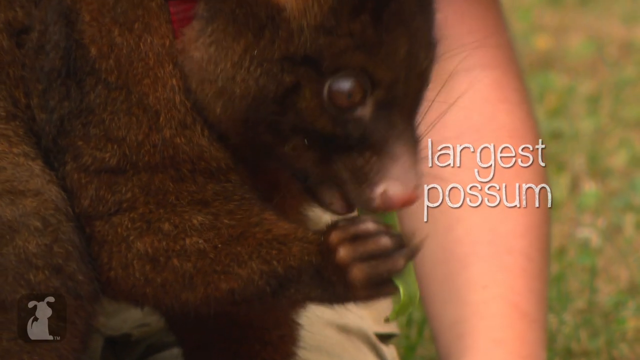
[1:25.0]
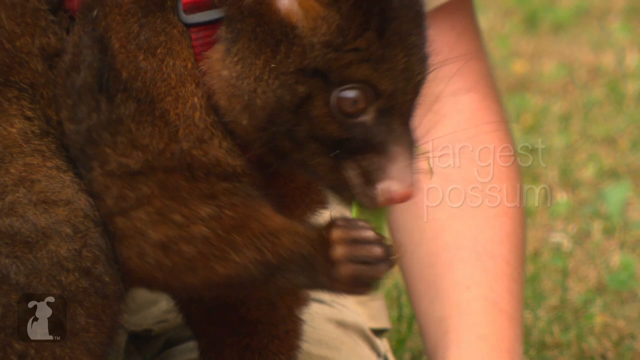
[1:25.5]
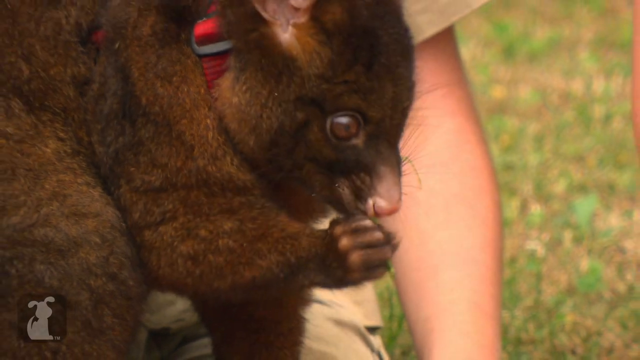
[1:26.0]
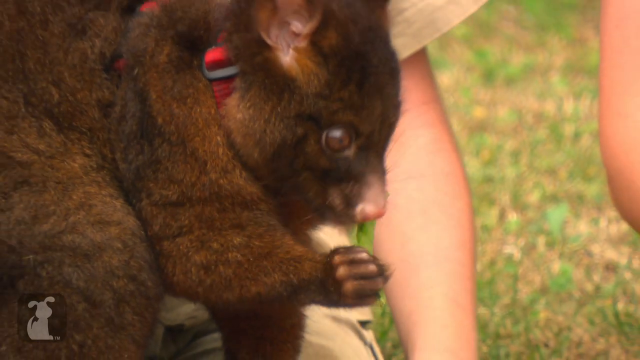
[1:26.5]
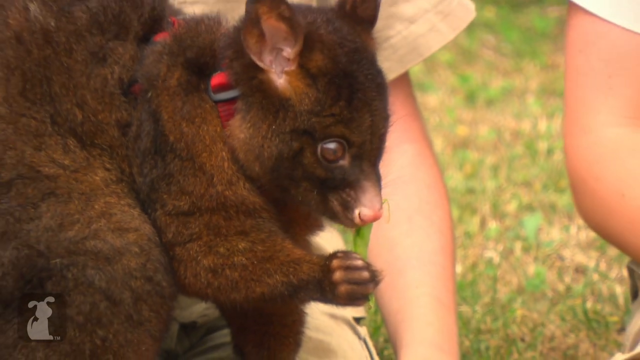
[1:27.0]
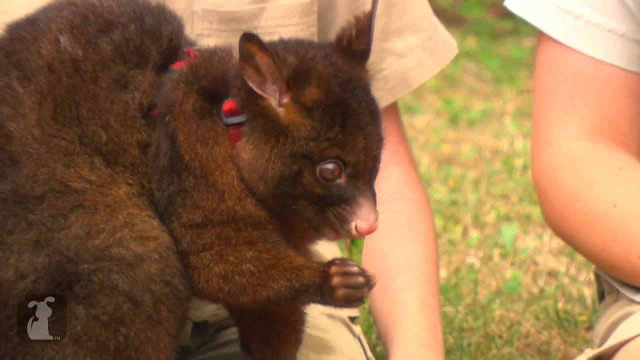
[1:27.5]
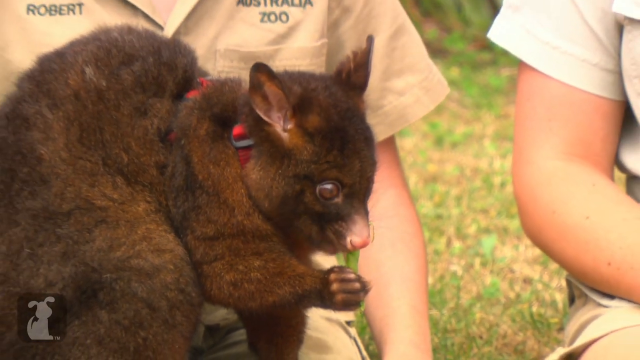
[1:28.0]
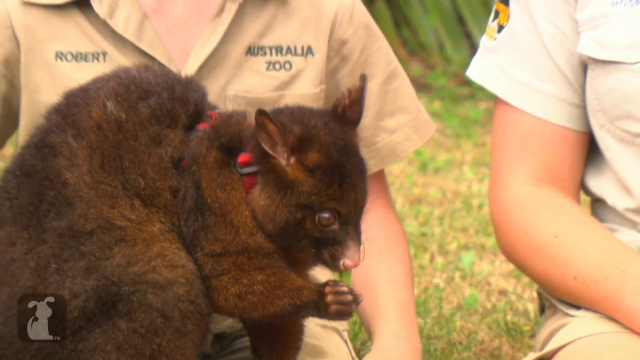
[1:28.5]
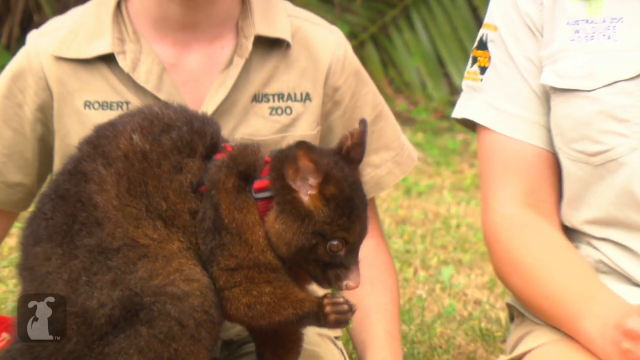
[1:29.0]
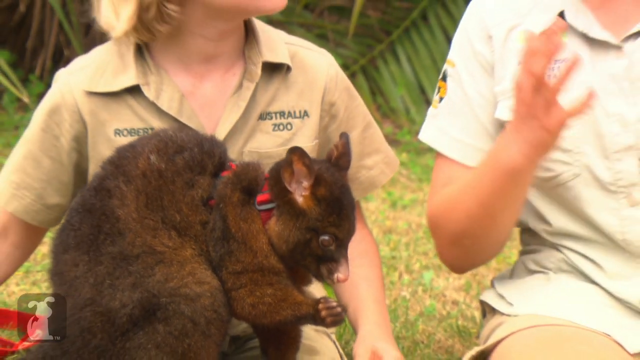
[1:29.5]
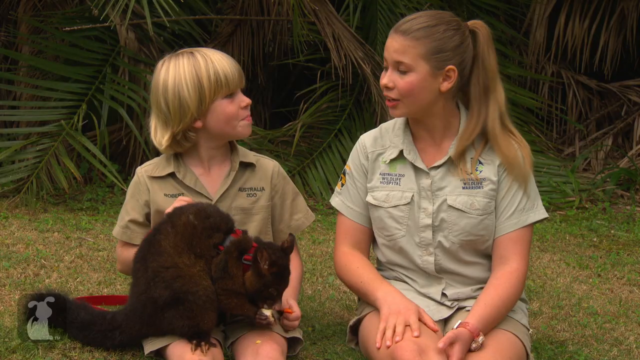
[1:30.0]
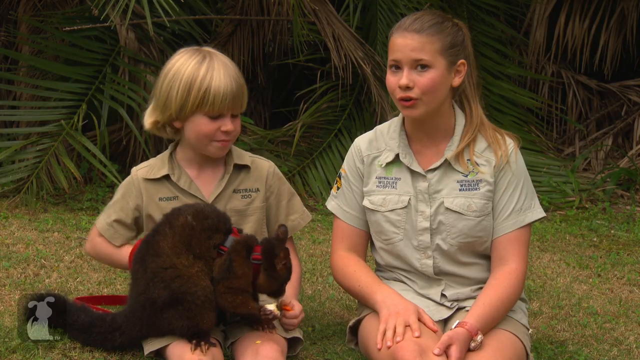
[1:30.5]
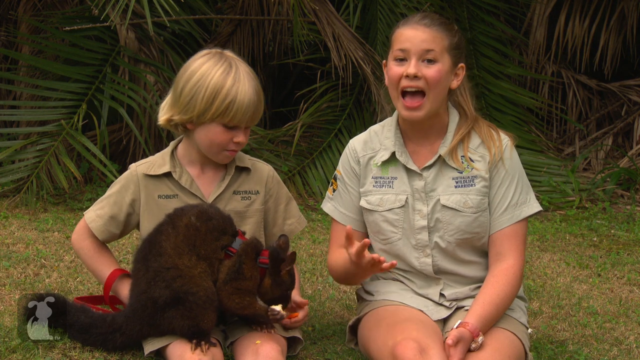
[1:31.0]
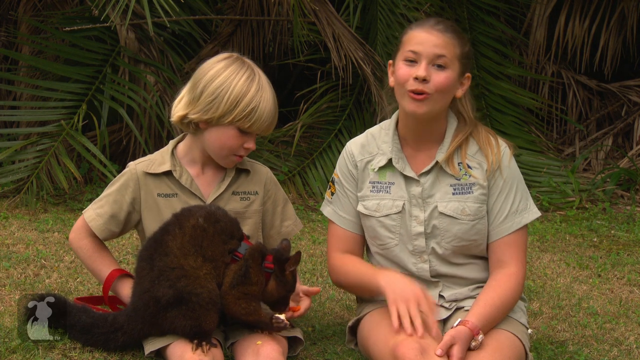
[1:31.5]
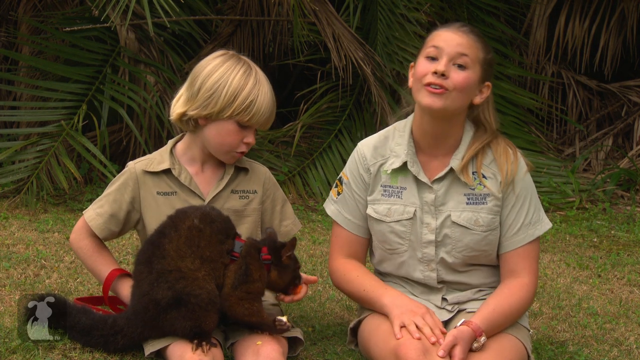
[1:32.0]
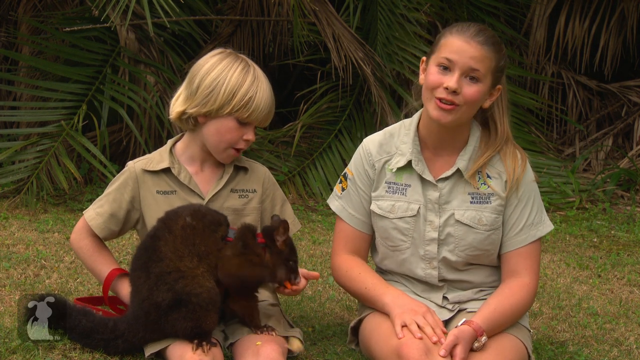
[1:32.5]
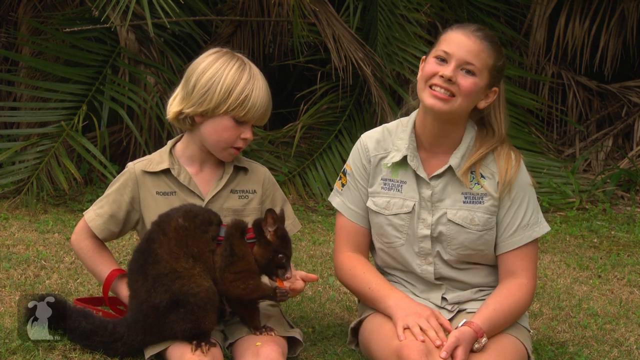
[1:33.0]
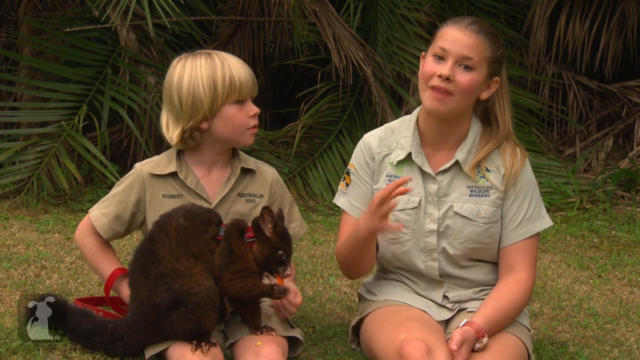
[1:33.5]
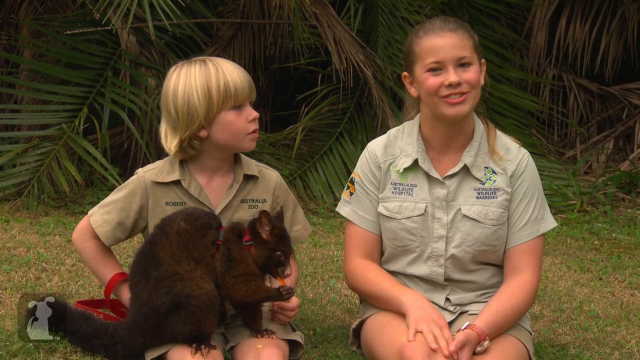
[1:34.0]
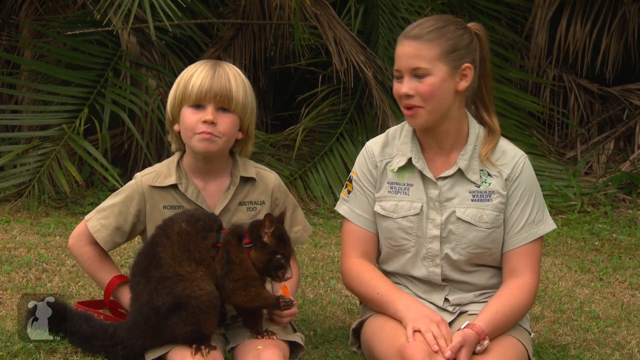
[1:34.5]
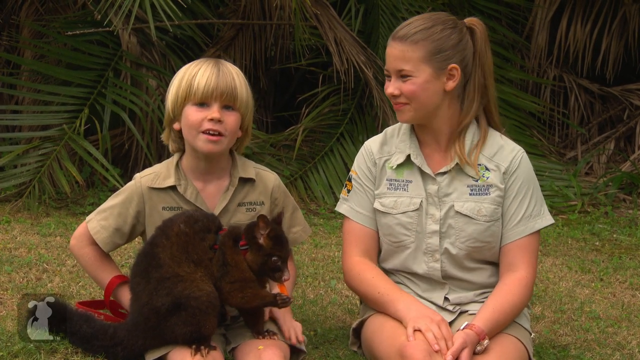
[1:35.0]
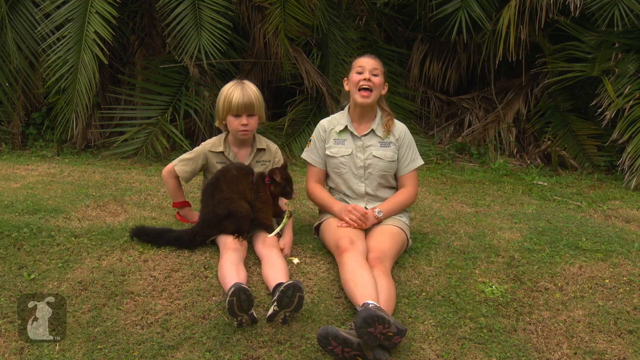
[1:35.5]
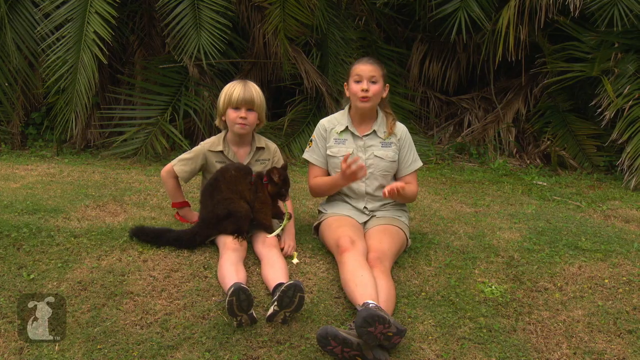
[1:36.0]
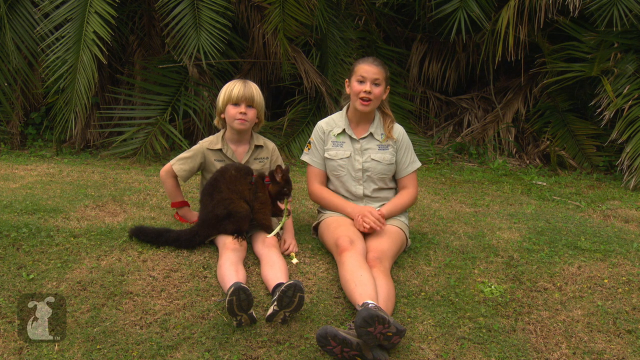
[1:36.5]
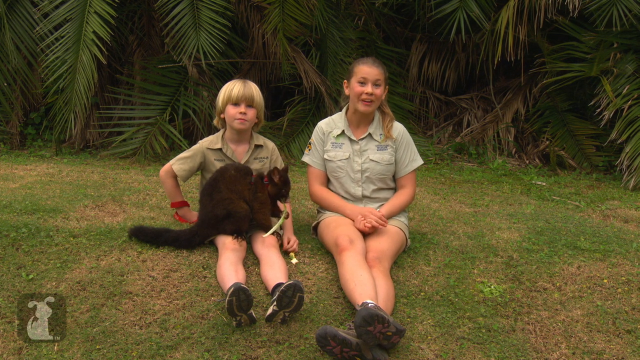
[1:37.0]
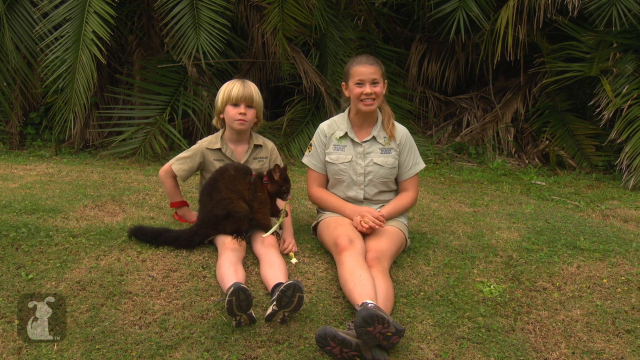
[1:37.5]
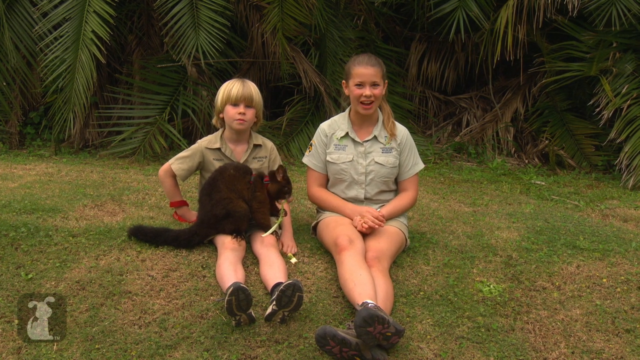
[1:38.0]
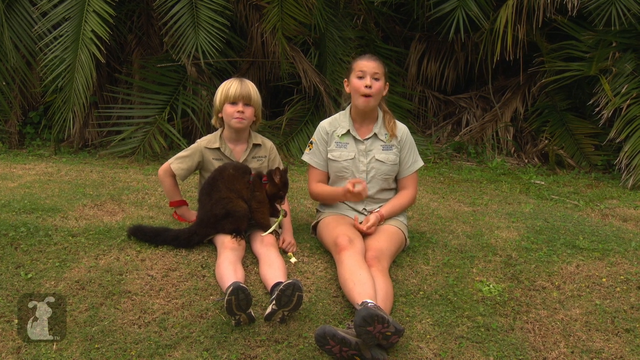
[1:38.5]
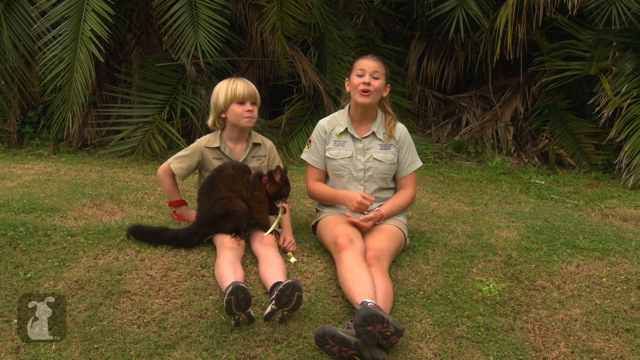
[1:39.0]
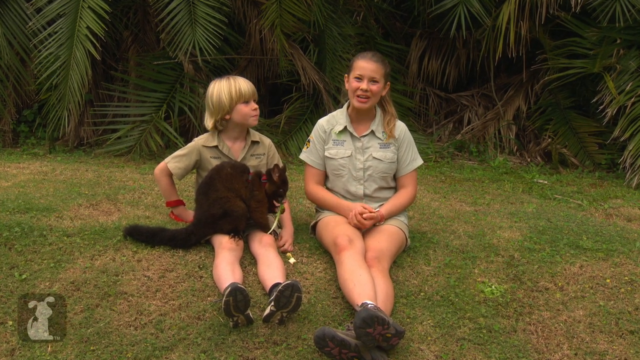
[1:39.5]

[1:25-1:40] The young boy and young girl wear greenish-tan shorts and button-up shirts and sit on green grass in front of tropical bushes and trees. The camera zooms in and out as the possum, sitting on the boy's lap with a red leash on, eats green plant material. The two talk about the possum to the camera. On the left side of the screen is an icon of a dog silhouette, and on the right a pink icon with a cat and white text above it reading "subscribe." At some point a white subtitle reads "largest possum."